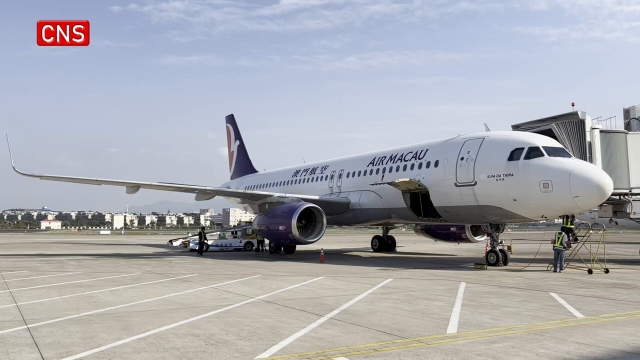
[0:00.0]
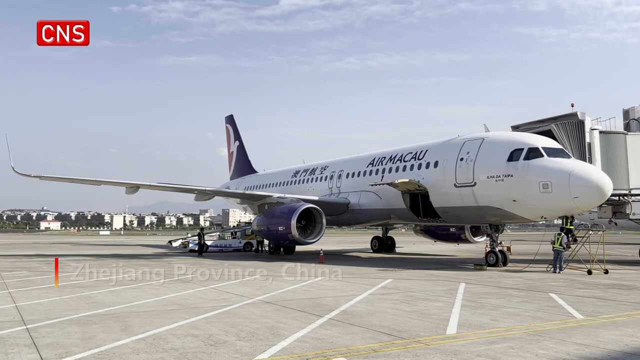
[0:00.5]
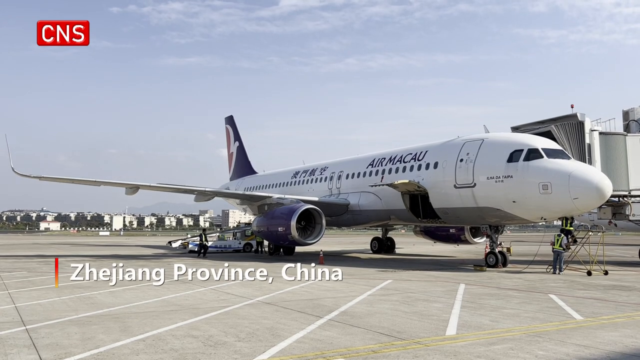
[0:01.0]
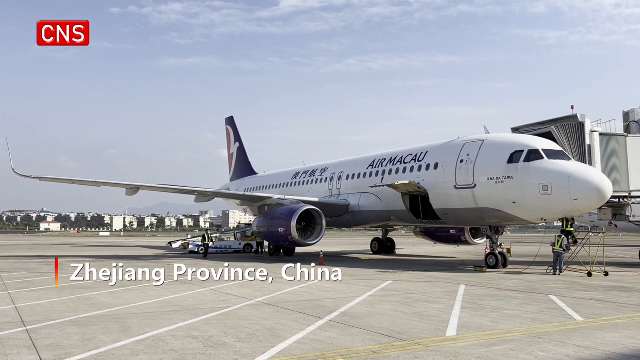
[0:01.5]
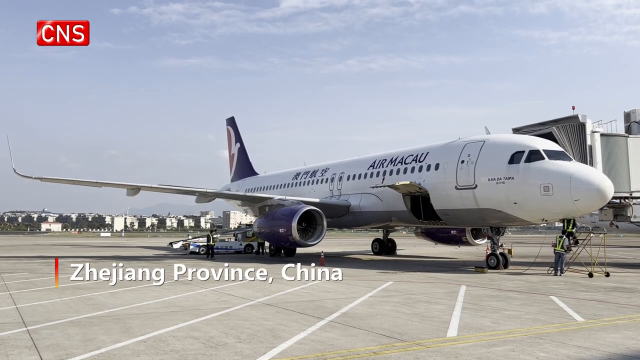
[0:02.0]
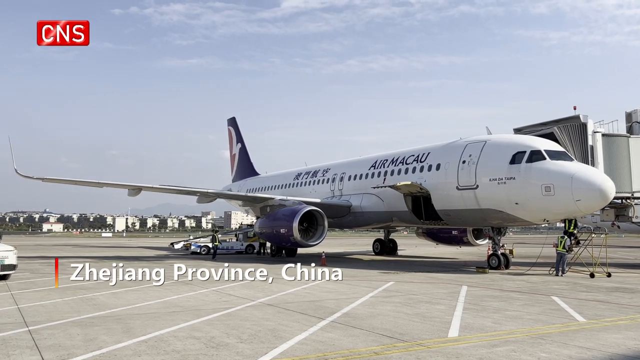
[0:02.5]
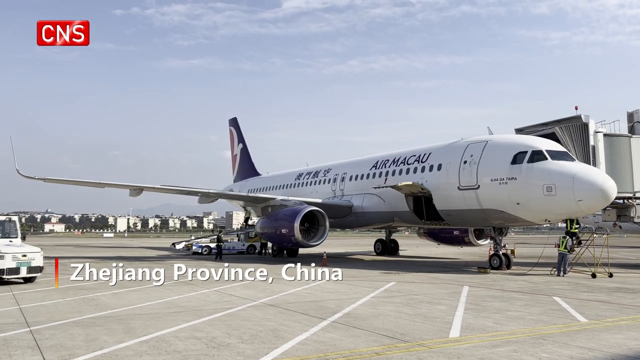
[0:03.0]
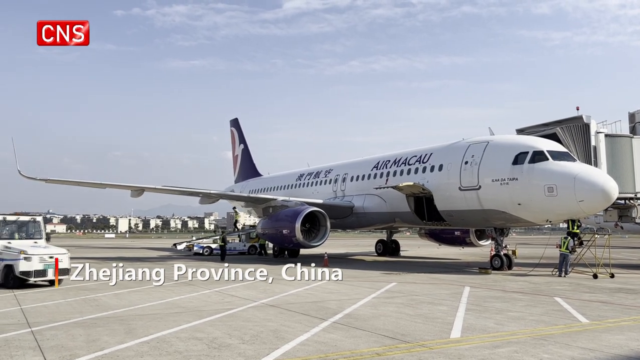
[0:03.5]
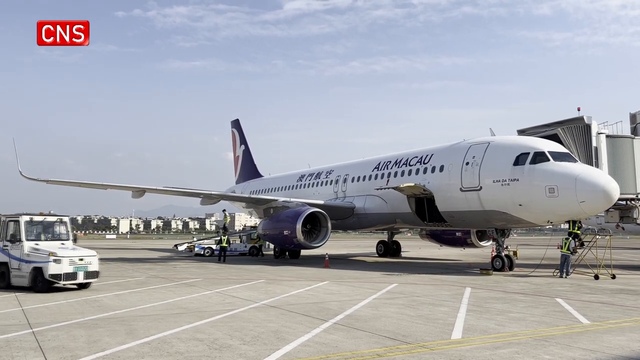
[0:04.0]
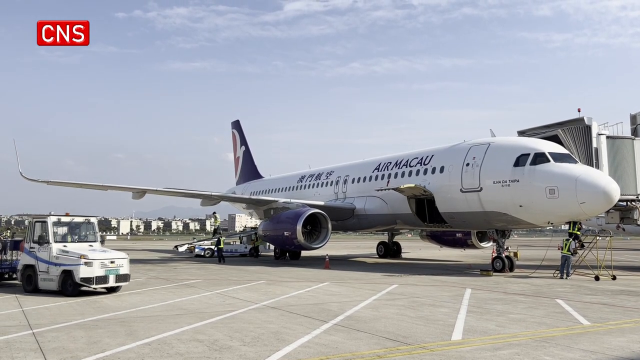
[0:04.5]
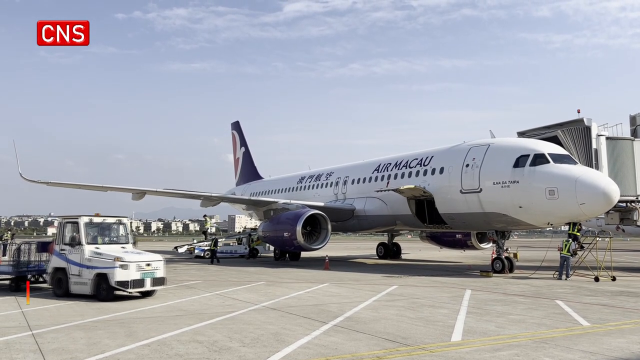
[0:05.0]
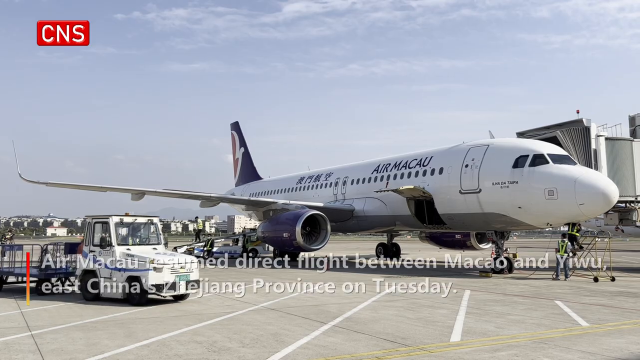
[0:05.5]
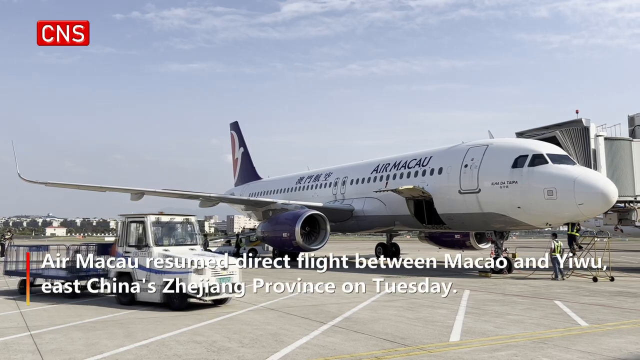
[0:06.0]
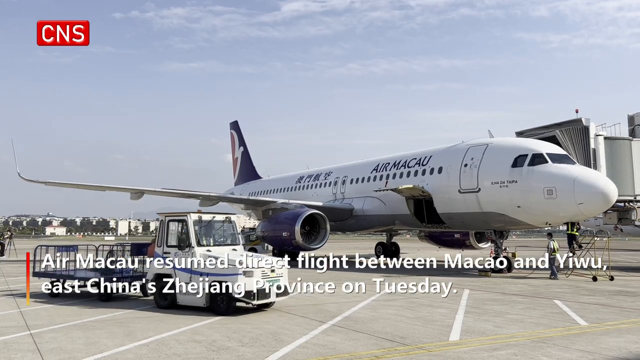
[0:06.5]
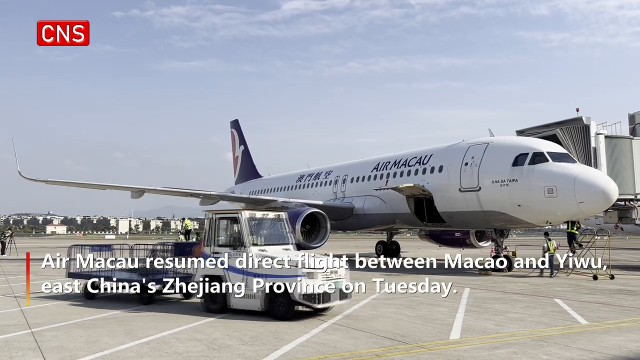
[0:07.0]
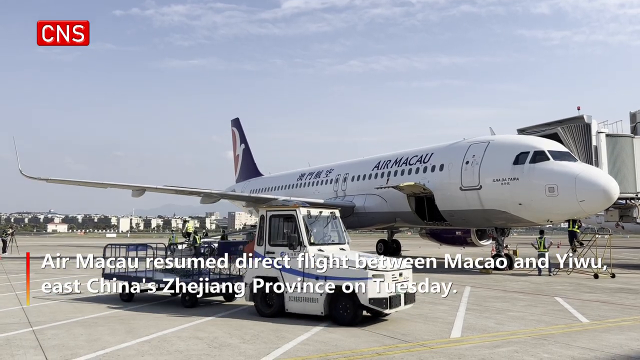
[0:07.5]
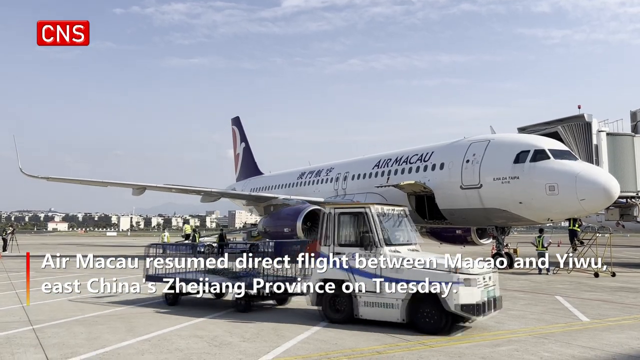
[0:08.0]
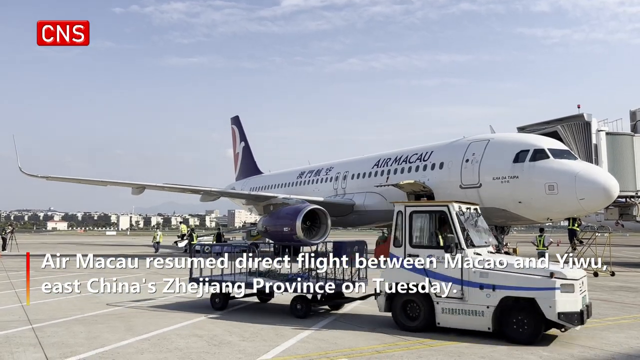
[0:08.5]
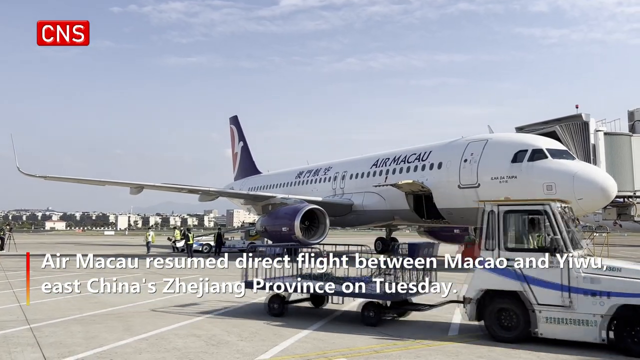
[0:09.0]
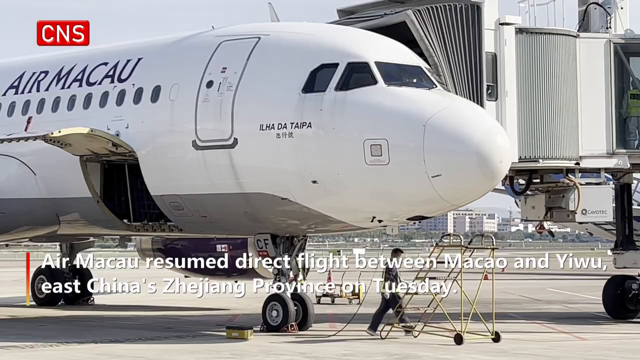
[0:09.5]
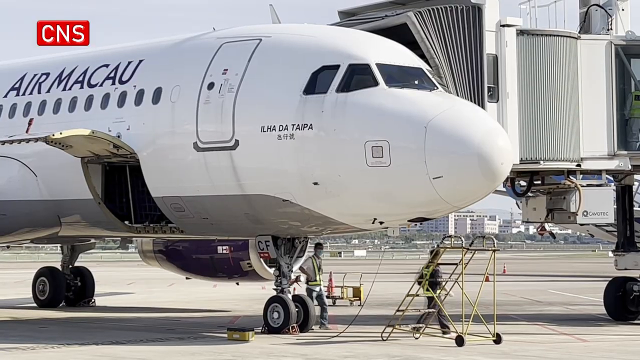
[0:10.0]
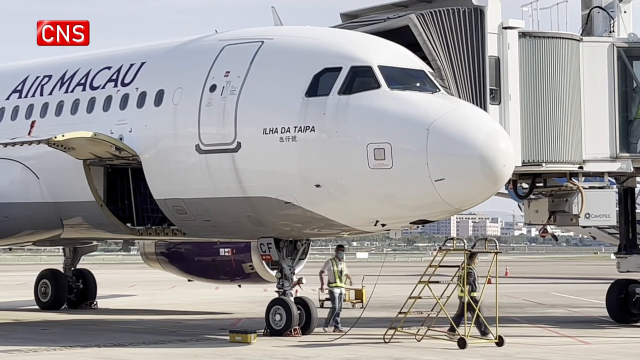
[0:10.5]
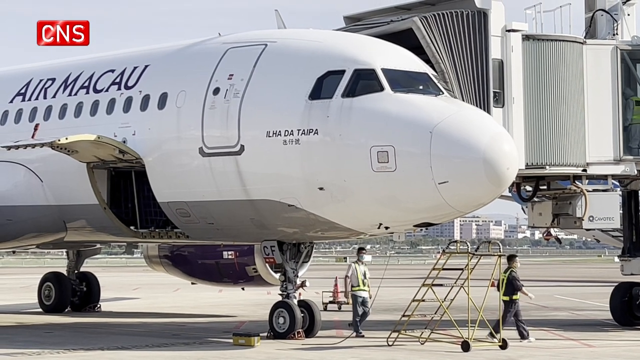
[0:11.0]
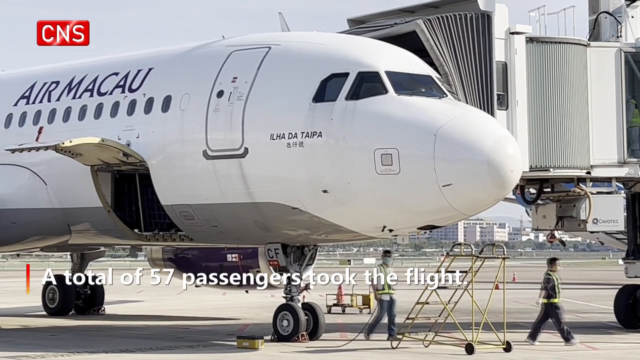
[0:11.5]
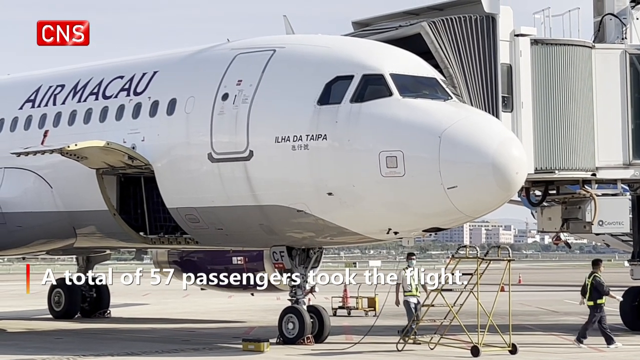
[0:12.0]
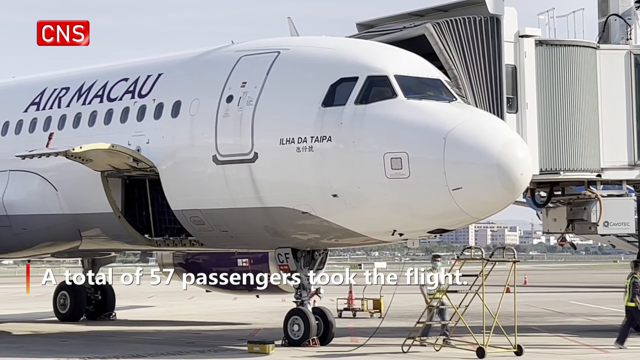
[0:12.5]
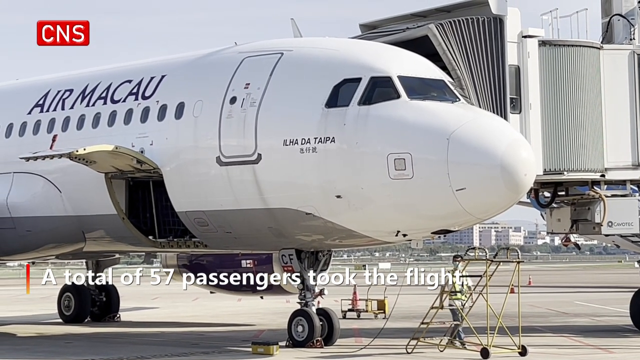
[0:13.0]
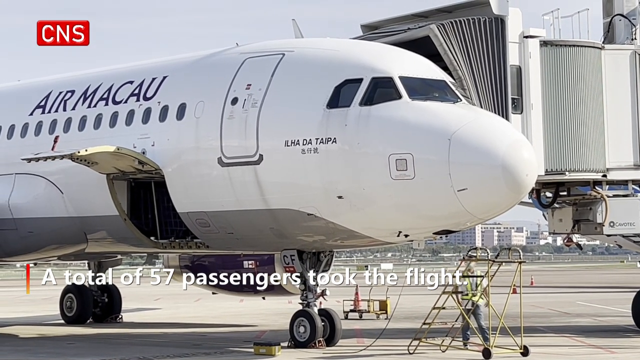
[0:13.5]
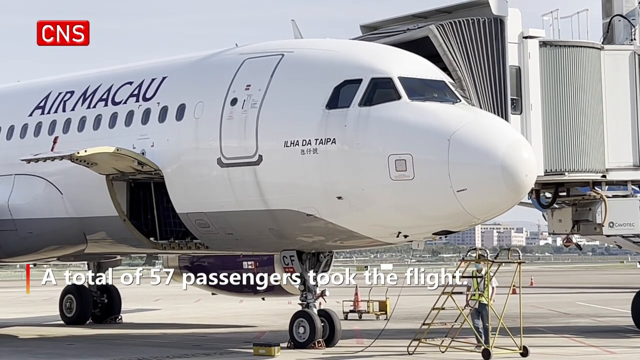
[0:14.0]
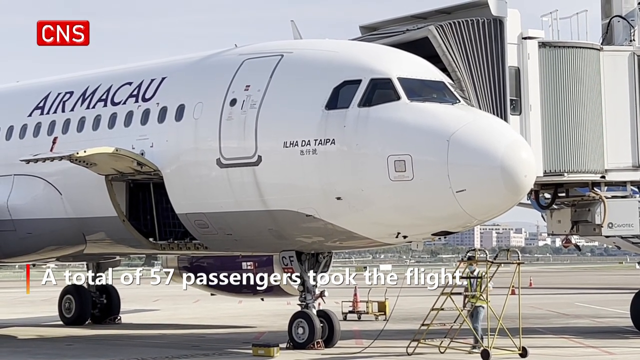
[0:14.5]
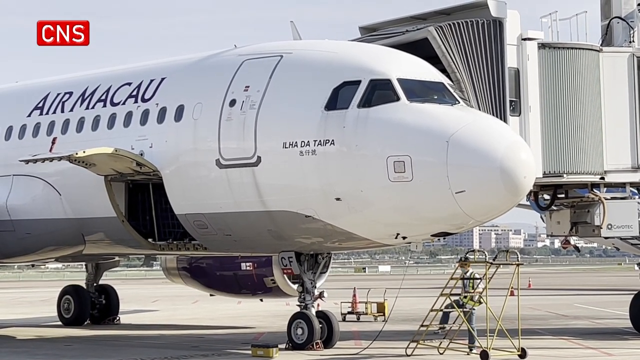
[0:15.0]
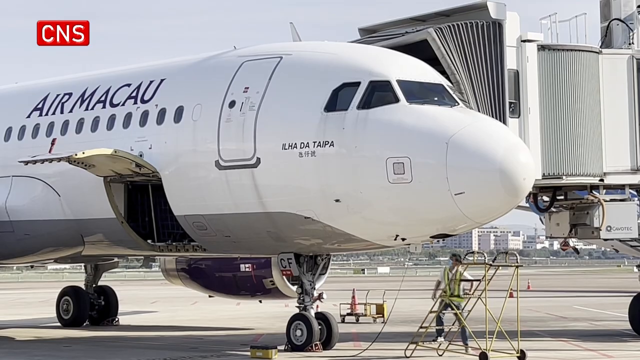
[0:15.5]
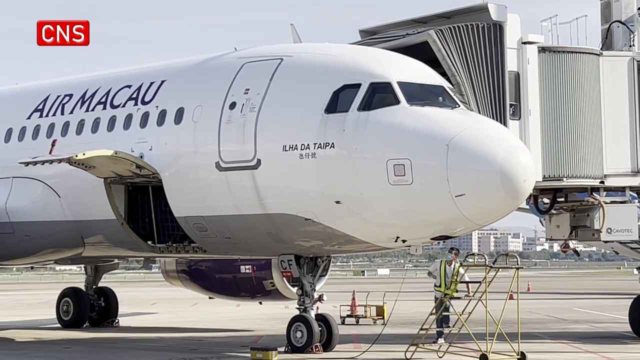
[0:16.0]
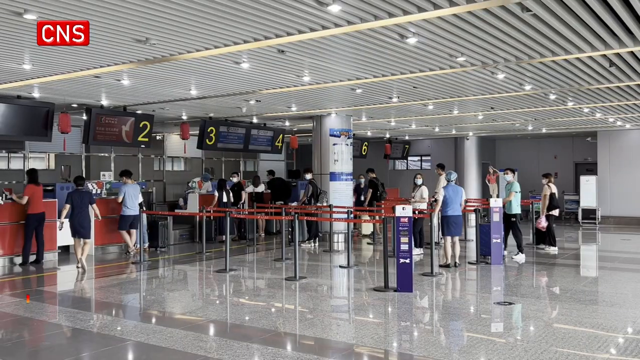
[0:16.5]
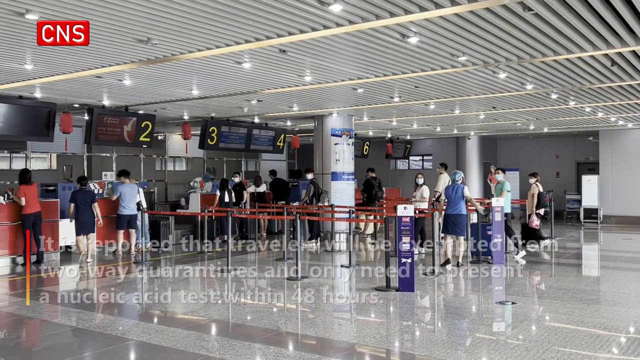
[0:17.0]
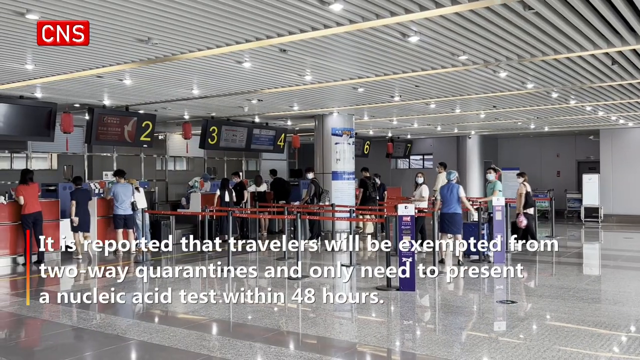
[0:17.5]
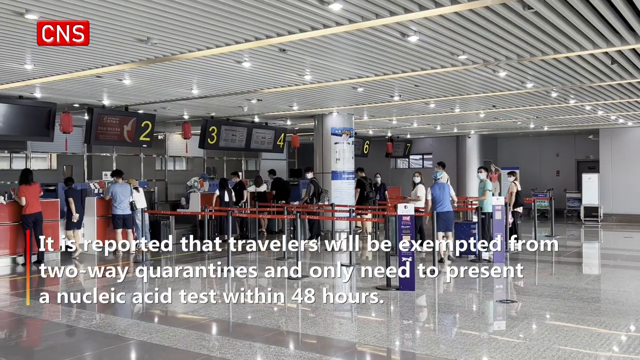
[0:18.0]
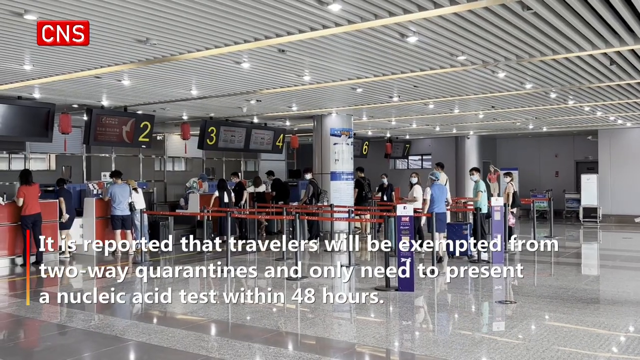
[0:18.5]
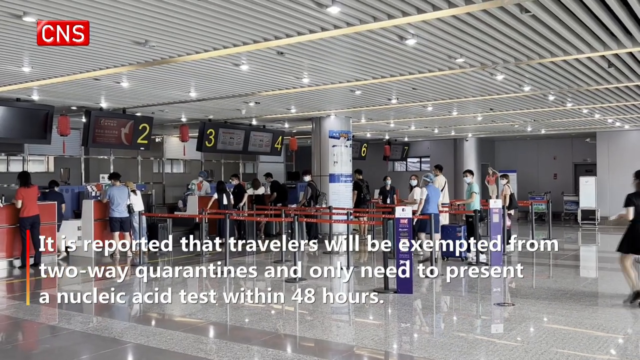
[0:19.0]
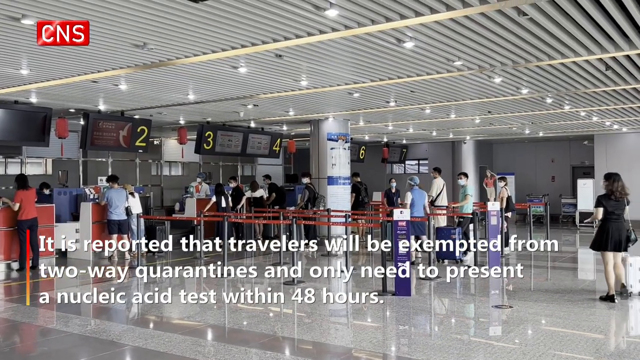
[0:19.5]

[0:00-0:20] On the tarmac of an airport there is a large white Air Macau plane, and next to it is the small machine that carries luggage up into the plane. The location is Zhejiang province in China. On-screen text reads "Air Macau resumed direct flights between Macau and Yiwu, east of China's Zhejiang province," followed by "On Tuesday, a total of 57 passengers took the flight." Next, text reads "it is reported that the travelers will be exempted from two-way quarantines and only need to present a nucleic acid test within 48 hours." Inside the airport, people are lining up in the check-in line to check in their bags and get their tickets. The flight seems to be going to Yiwu.